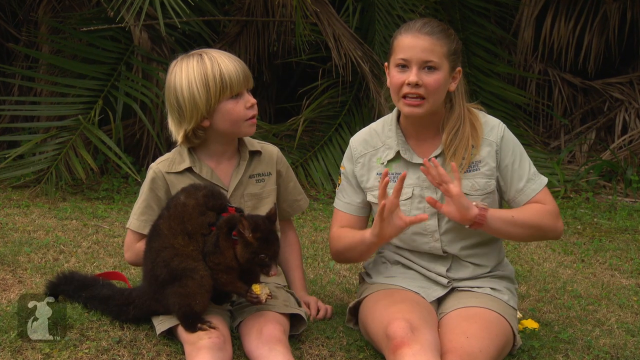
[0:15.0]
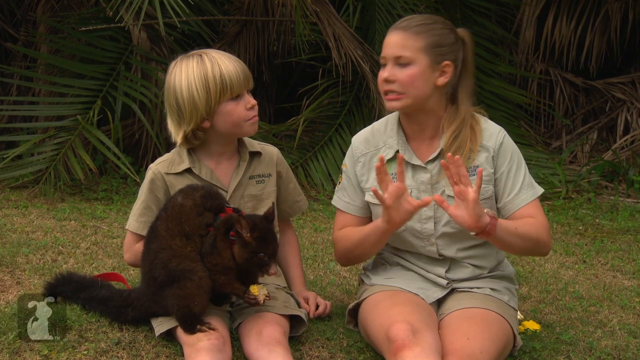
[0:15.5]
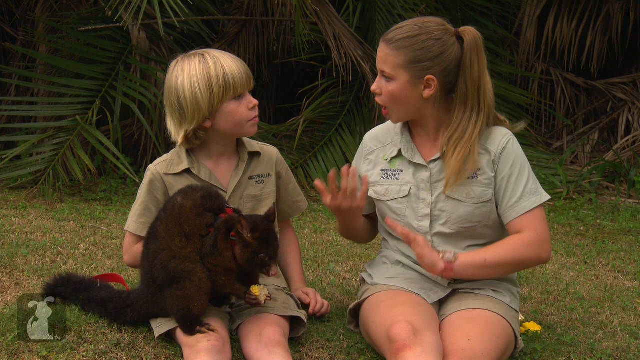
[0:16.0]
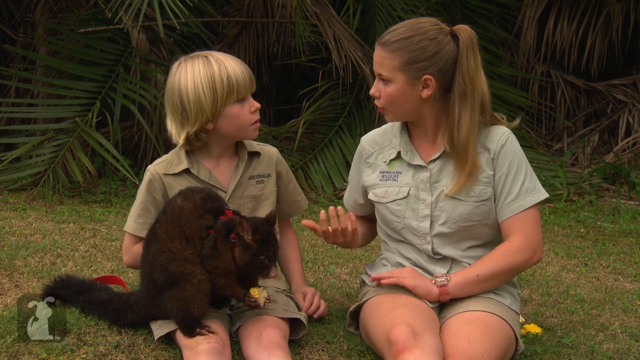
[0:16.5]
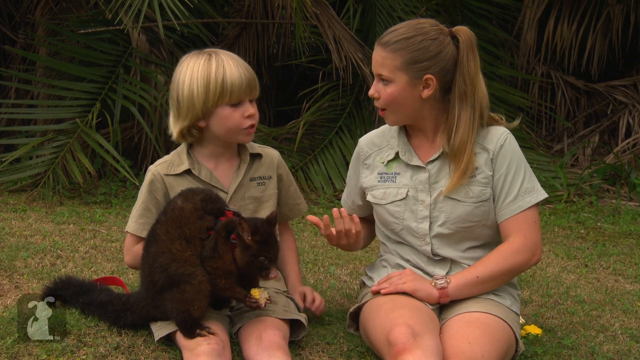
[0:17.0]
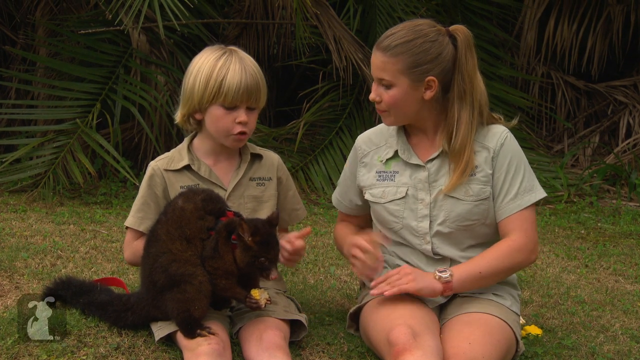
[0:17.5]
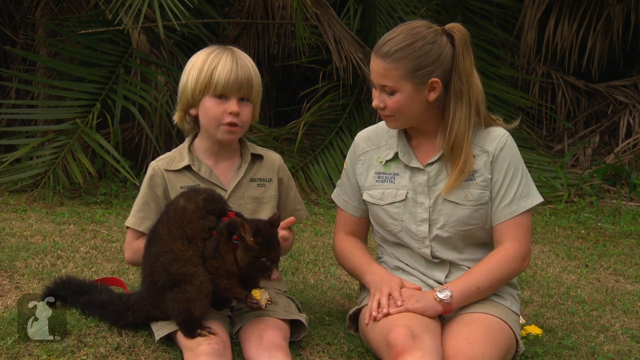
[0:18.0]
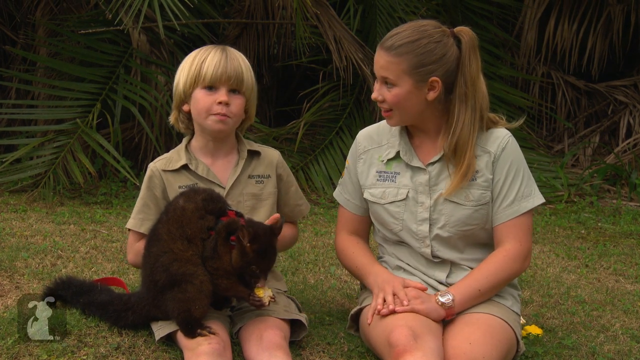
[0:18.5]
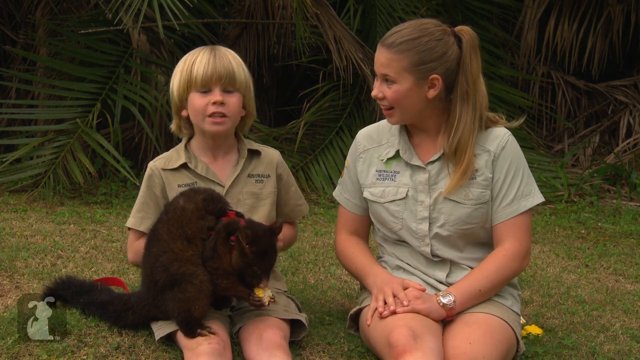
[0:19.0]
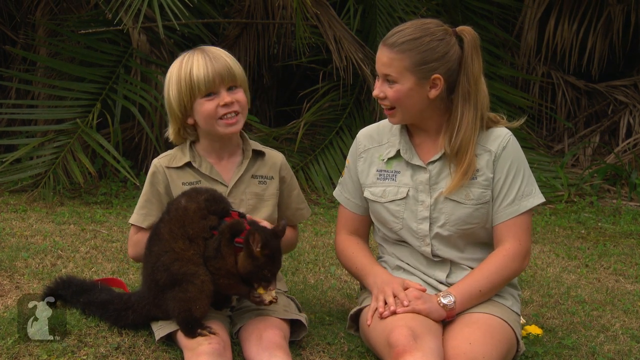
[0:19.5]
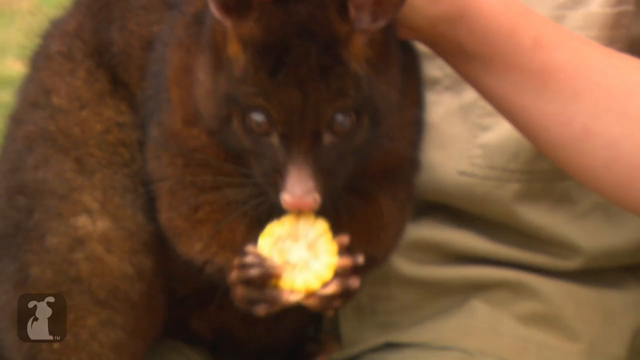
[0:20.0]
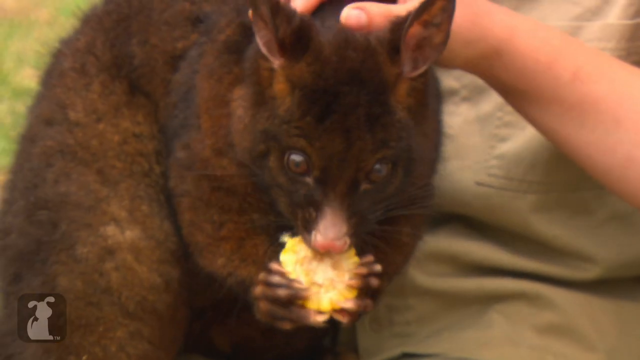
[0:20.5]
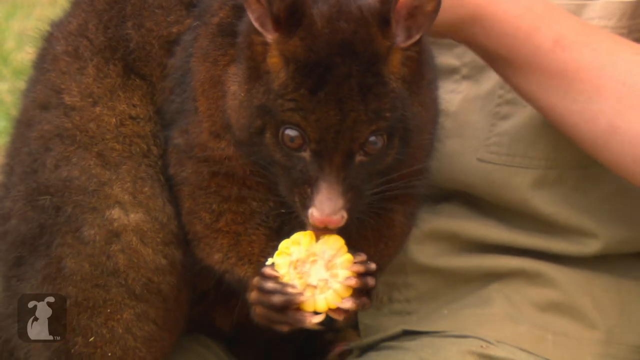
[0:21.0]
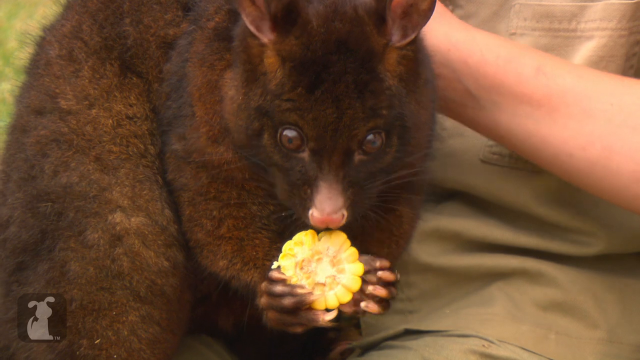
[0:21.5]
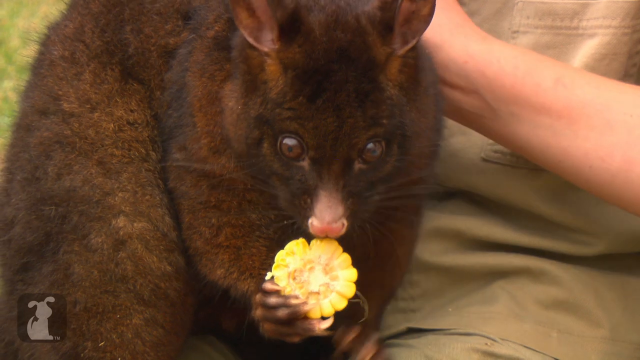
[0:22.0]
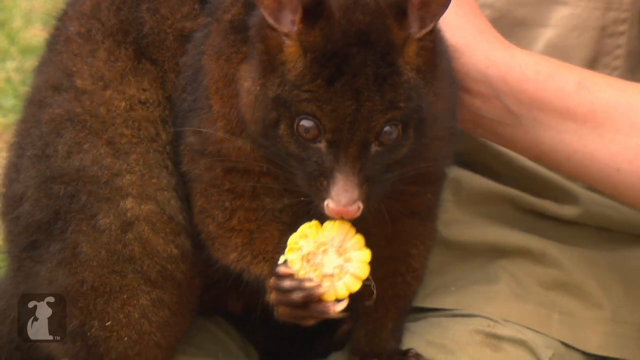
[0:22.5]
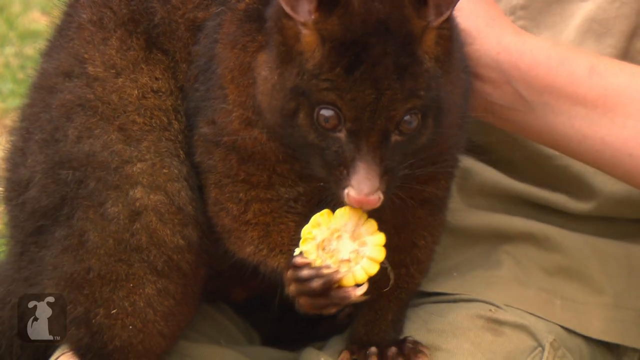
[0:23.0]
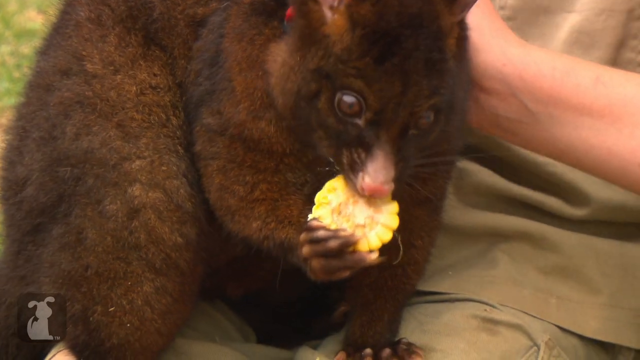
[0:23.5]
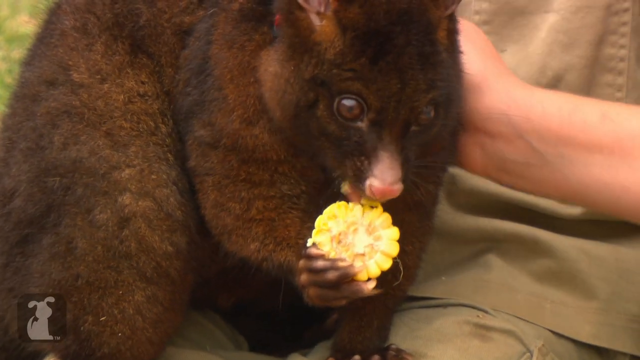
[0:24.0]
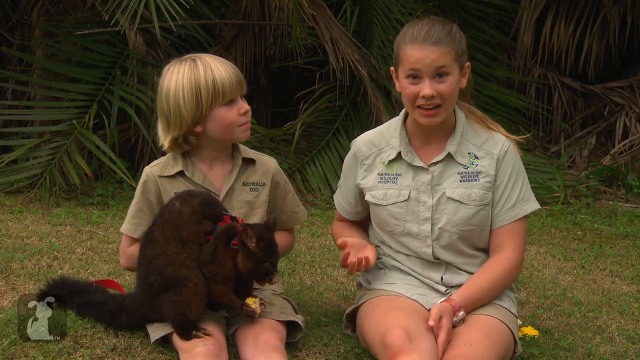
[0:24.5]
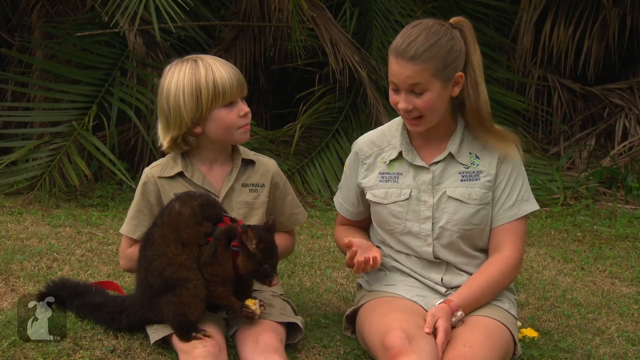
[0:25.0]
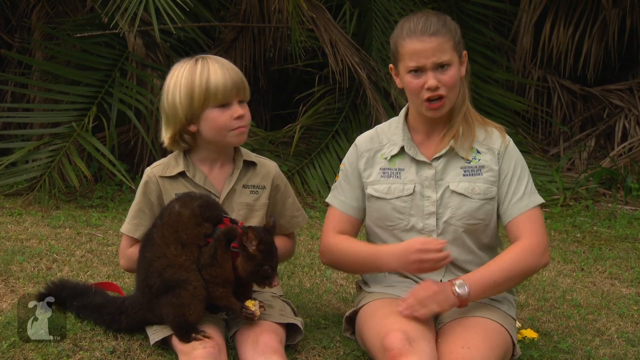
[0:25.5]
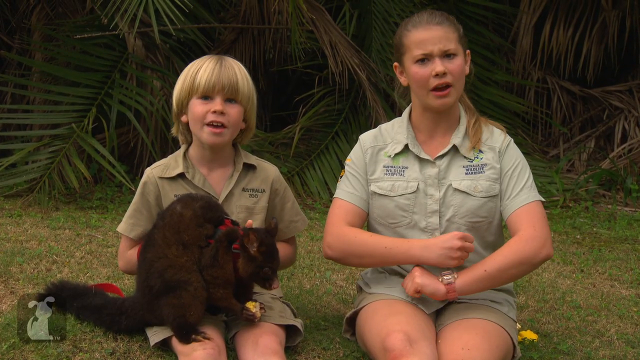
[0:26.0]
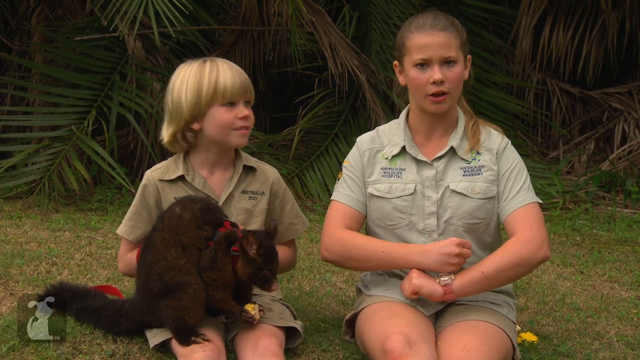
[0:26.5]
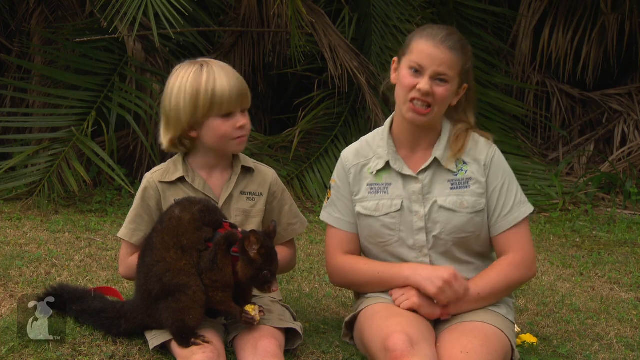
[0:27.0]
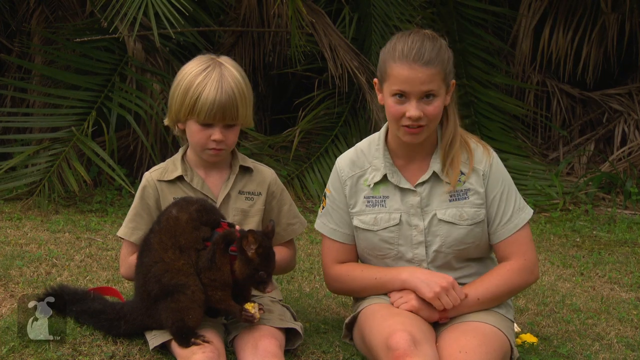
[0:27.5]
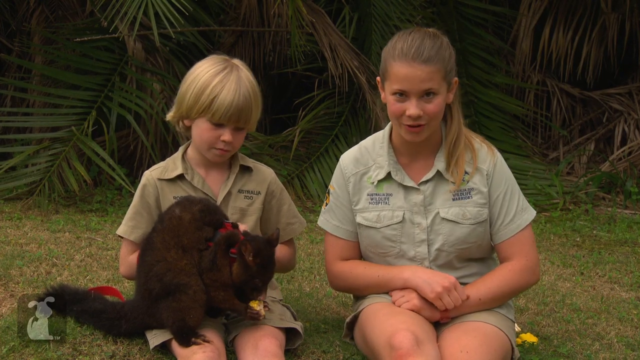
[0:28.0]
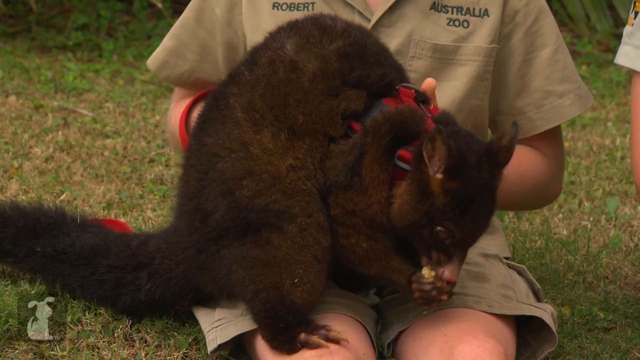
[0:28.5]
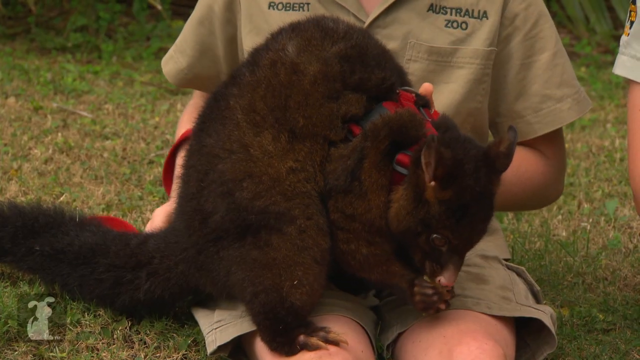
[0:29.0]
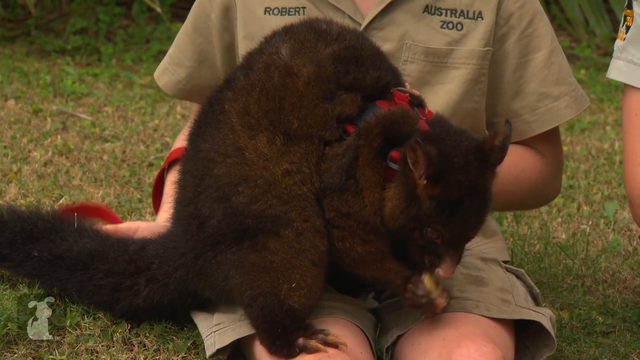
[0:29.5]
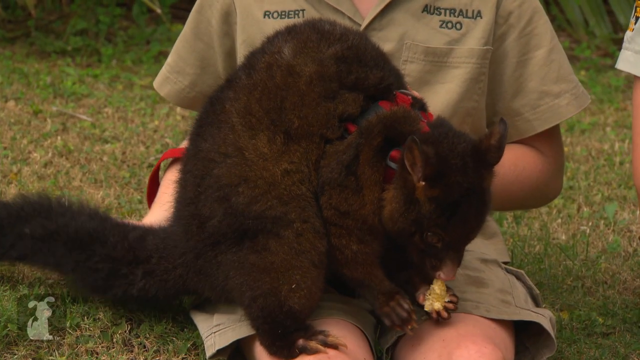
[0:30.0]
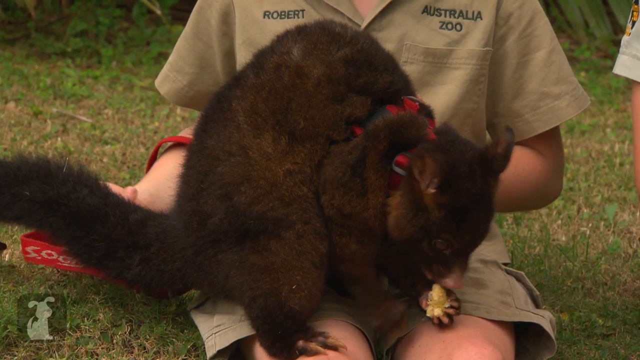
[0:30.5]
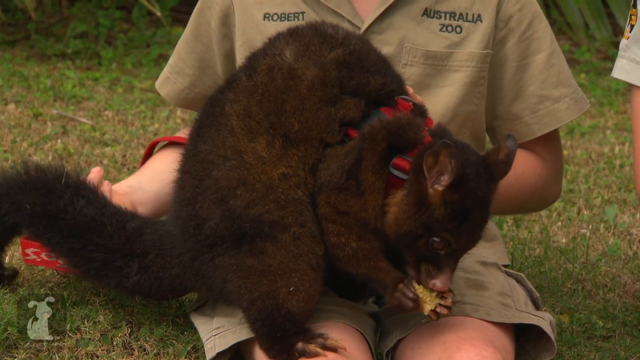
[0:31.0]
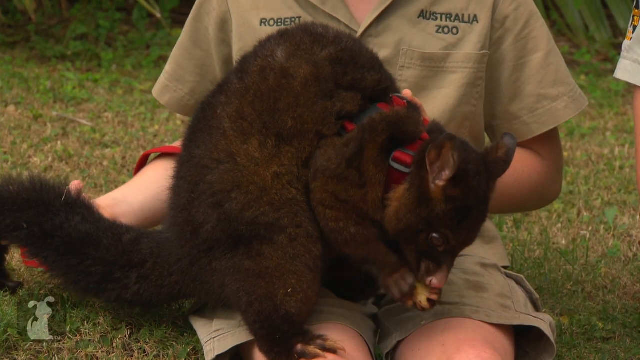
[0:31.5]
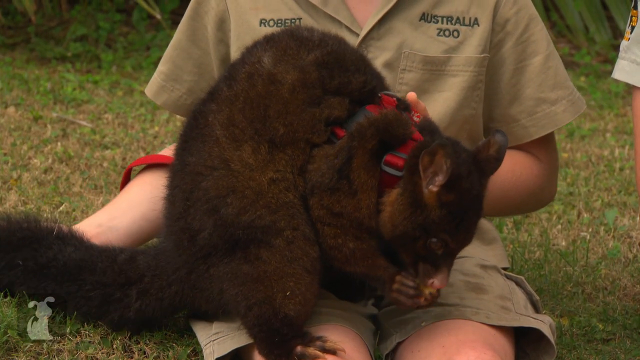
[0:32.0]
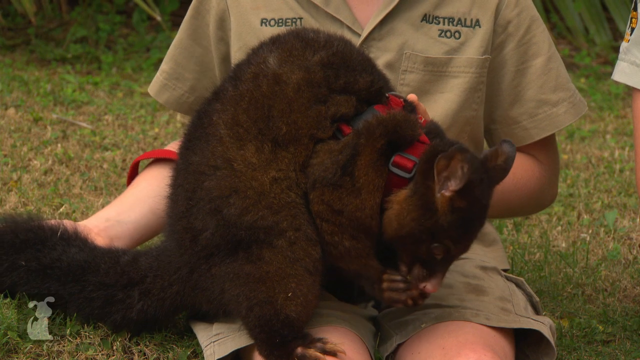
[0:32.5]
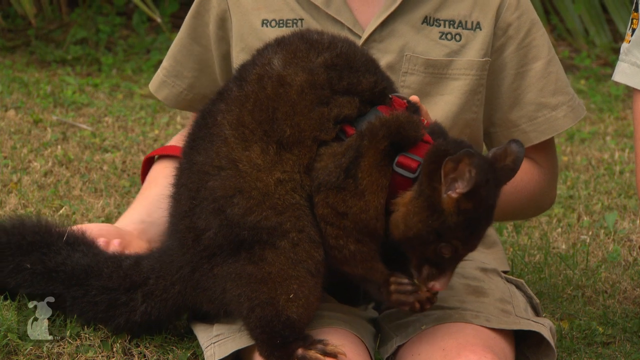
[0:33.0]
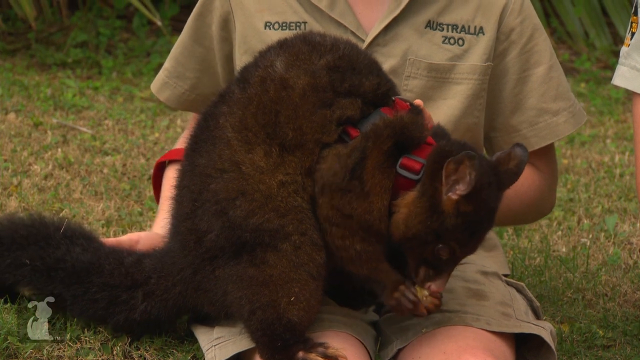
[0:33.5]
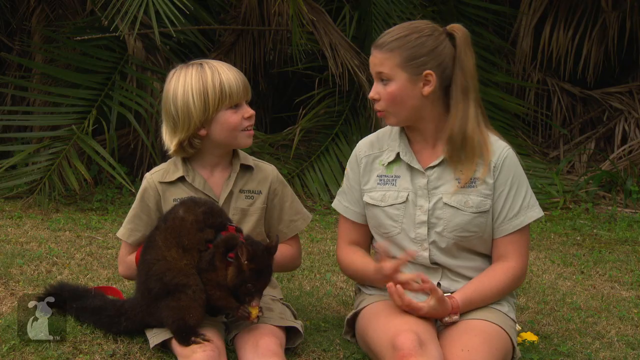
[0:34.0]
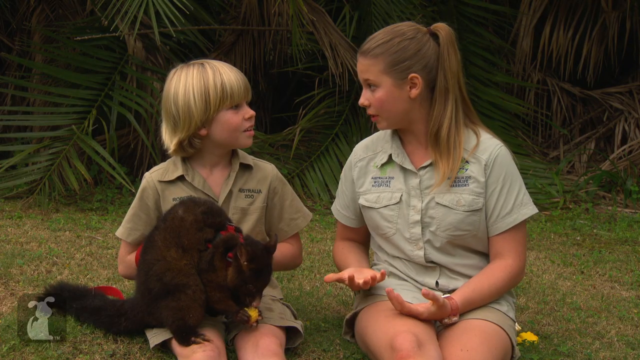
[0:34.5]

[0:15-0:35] The young boy and young girl hold the possum on its leash as it appears to be eating something, and they talk about the animal while it eats. The camera then moves to a more zoomed-in view, where it becomes clear the possum is eating a piece of corn. The boy holds the possum and pets it as it eats on his lap. Two icons are on screen: one on the left showing a silhouette of an animal, and one on the right showing a cat with the text "subscribe" above it.